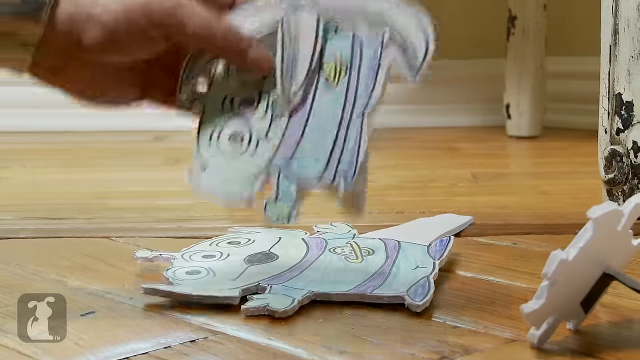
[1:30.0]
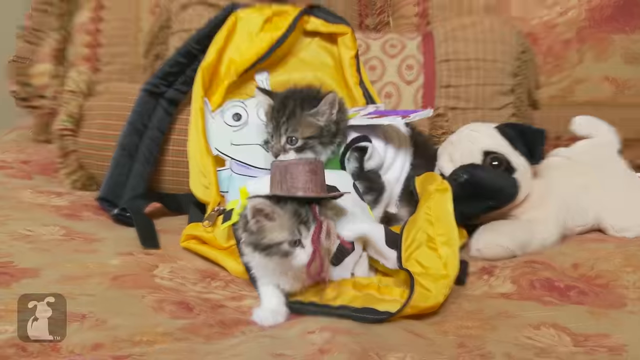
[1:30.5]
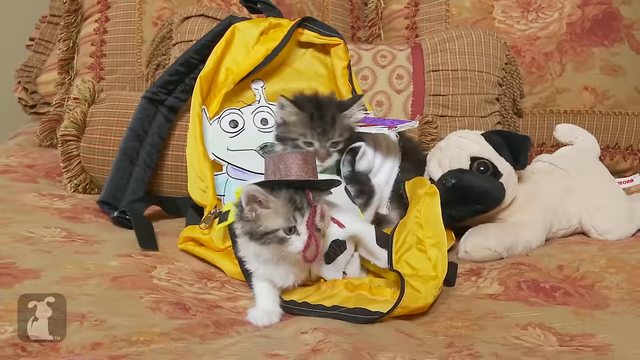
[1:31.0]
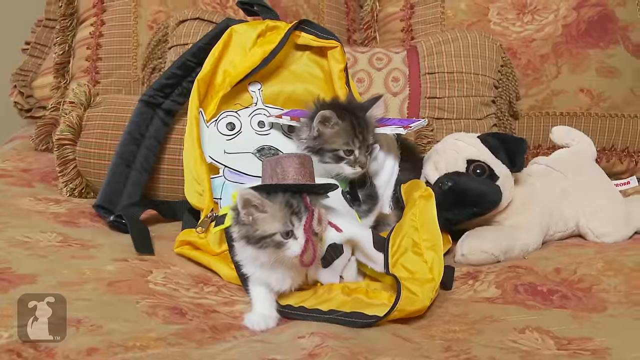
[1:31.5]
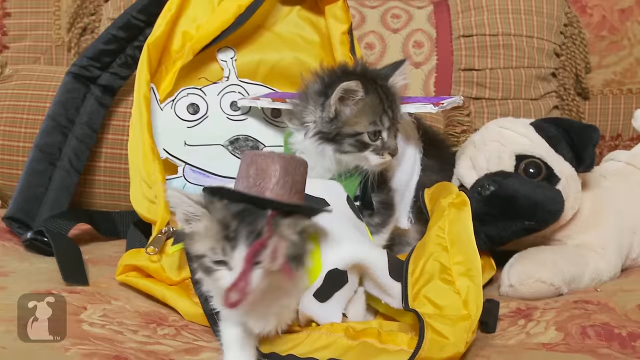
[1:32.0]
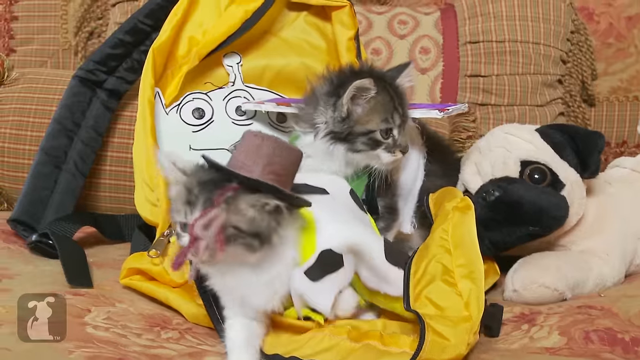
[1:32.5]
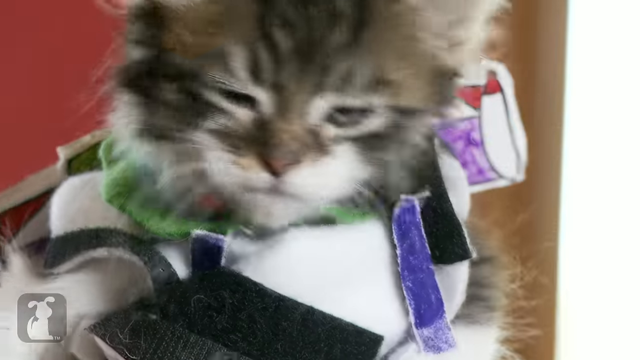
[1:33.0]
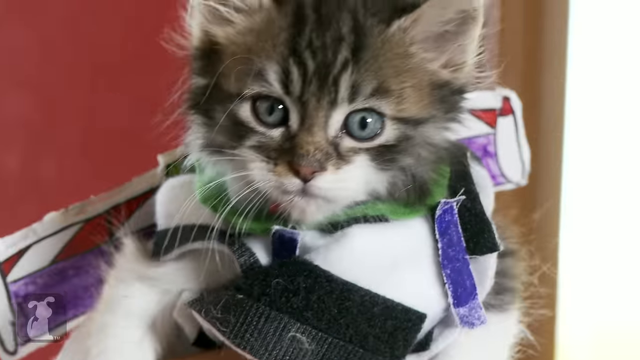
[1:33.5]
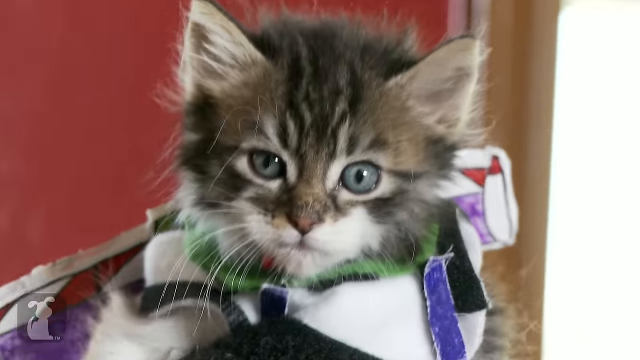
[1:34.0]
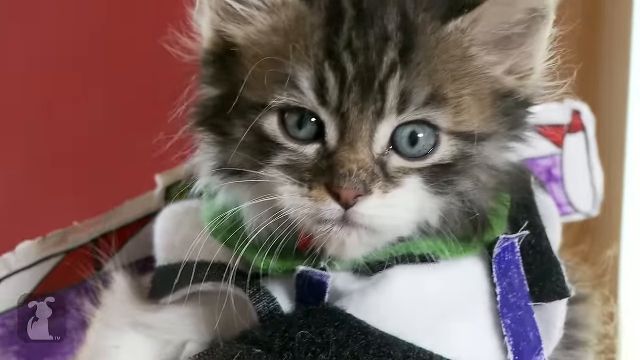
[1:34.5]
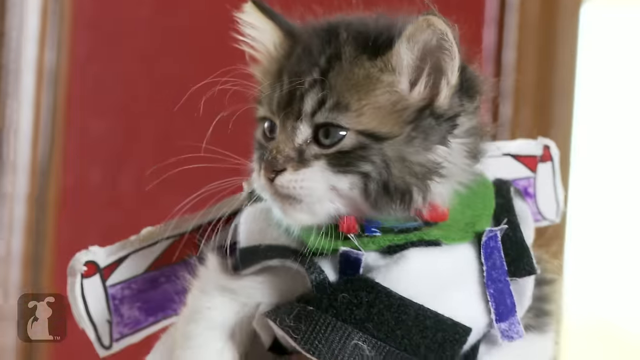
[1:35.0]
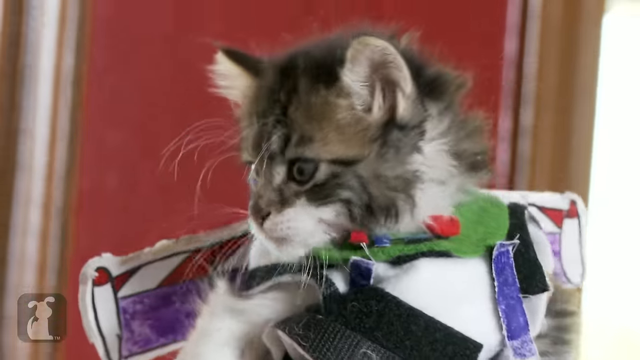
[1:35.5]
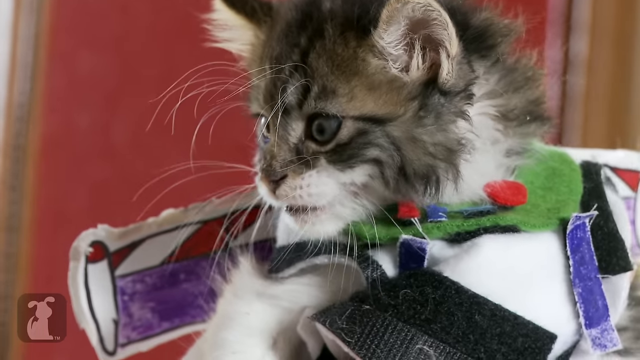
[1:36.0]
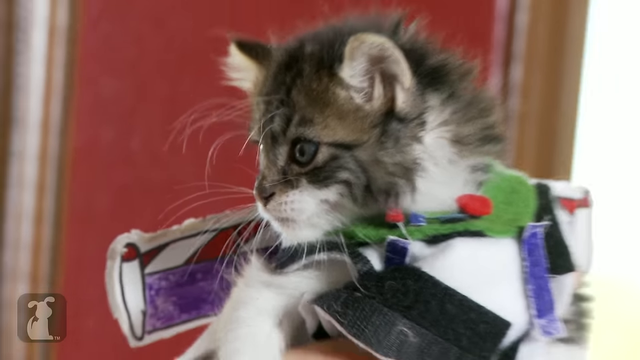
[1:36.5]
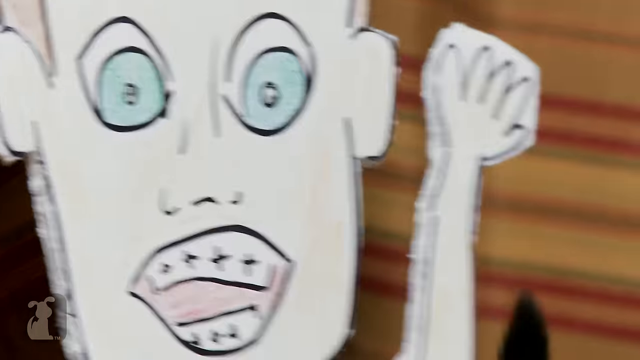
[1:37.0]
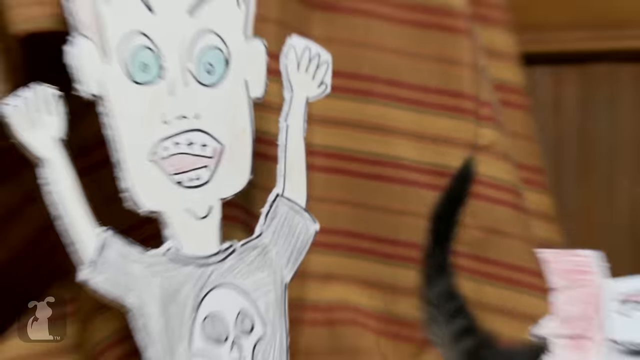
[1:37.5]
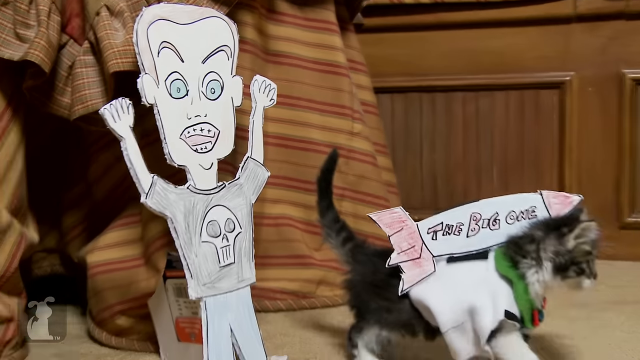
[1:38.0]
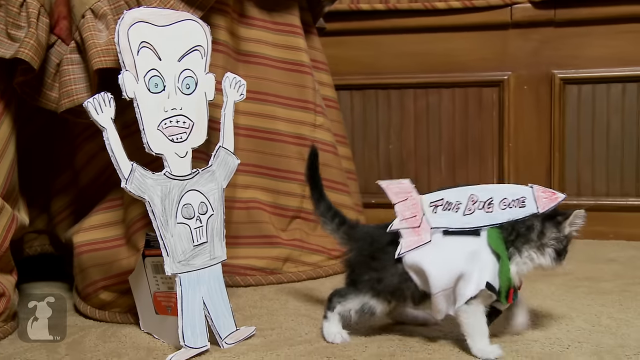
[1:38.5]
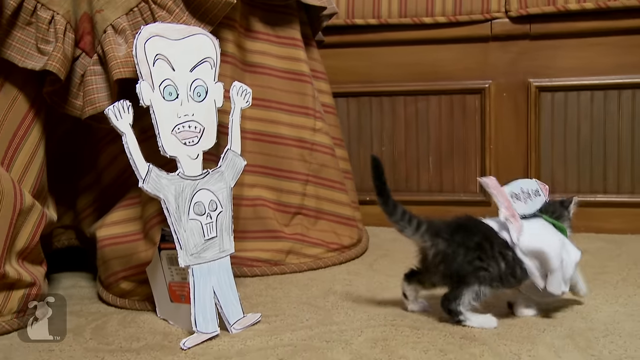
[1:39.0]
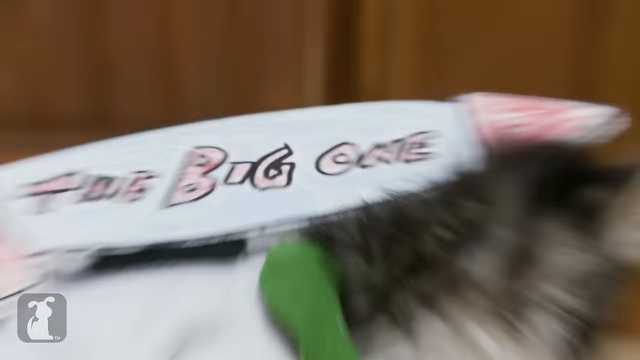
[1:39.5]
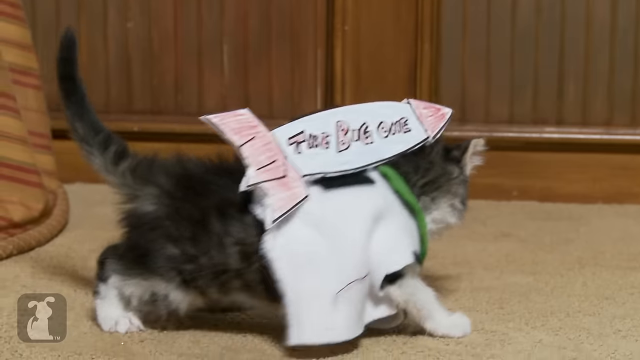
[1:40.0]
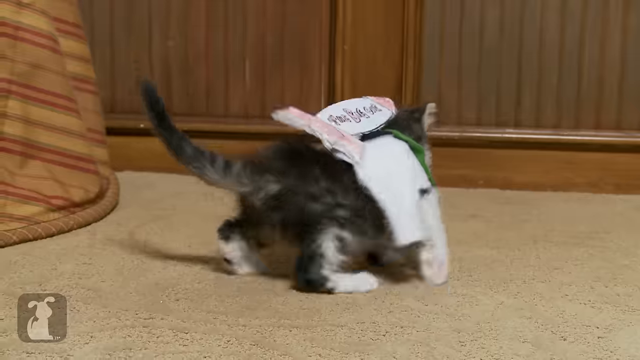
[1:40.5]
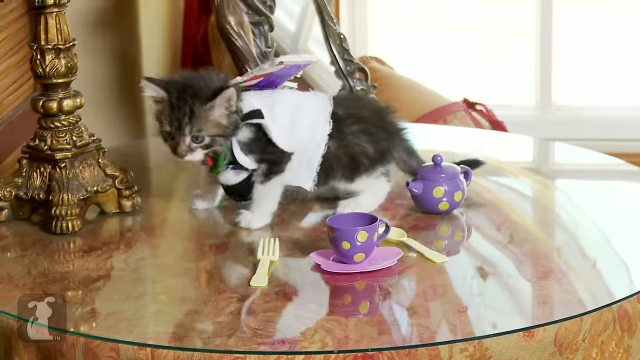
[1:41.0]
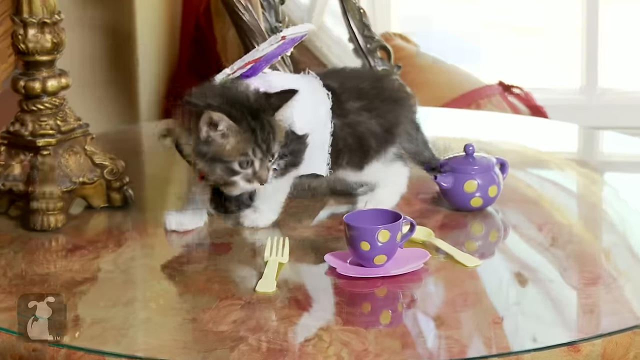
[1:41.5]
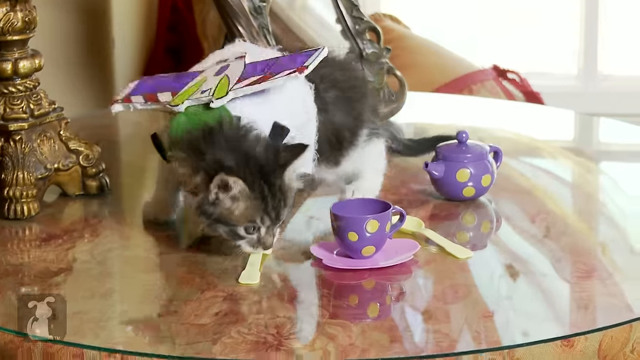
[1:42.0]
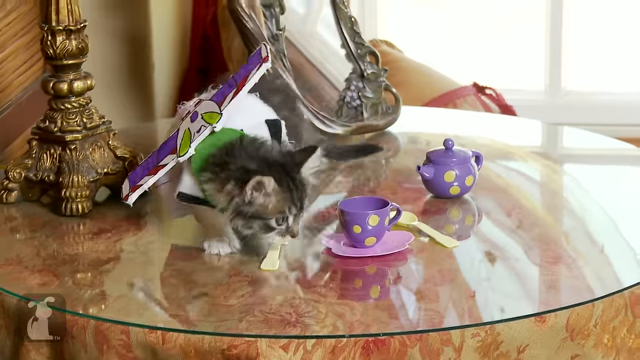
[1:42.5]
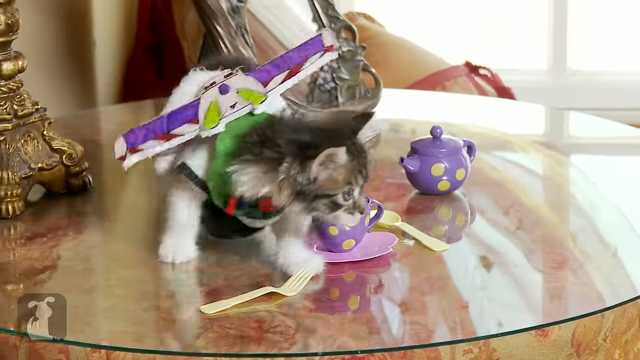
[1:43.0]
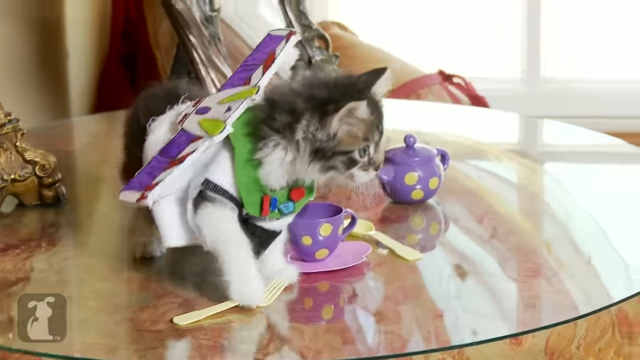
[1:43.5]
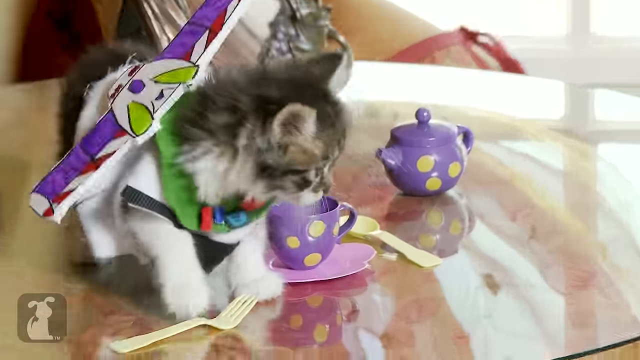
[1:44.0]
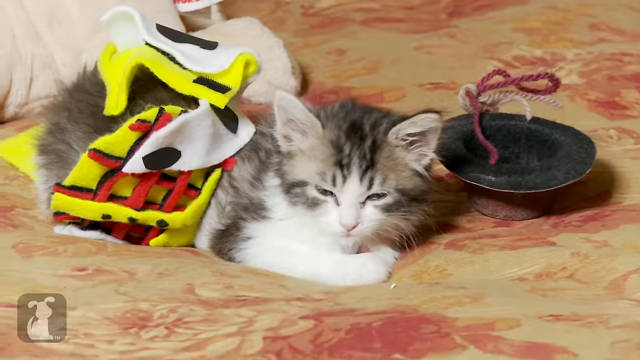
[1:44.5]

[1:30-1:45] The two kittens seem to be getting tired of playing in the toy world scenario. They are still wearing their cardboard cutouts: one is wings and the other appears to be the shape of a space rocket. They wander around. This time the hat is on one kitten's head, which makes it easier for that kitten to move. They seem very tired, sniffing around each other, and there is not much activity. Finally one of the cats lies down and has a snooze; it does not appear very comfortable because of the attachments to its body, but the cat closes its eyes.